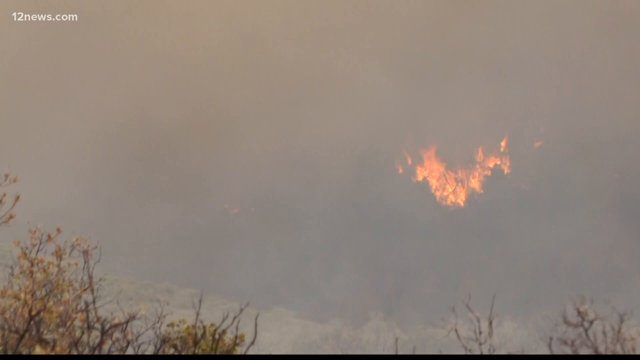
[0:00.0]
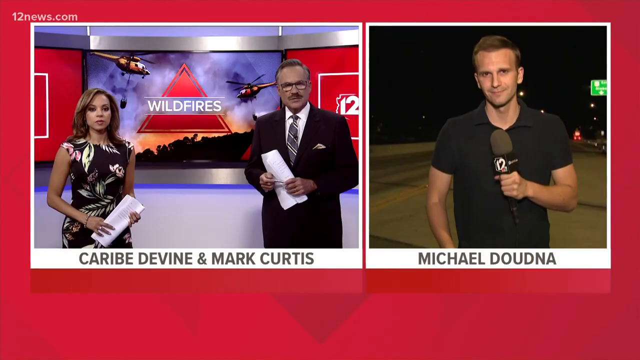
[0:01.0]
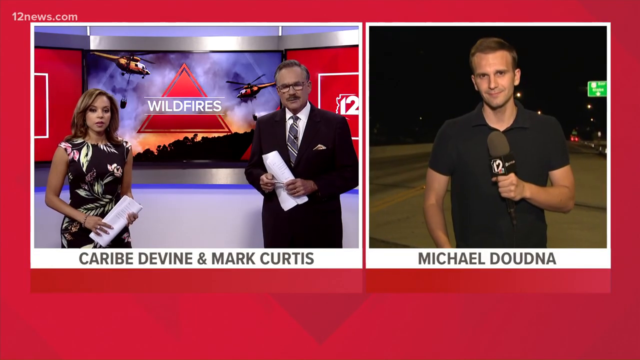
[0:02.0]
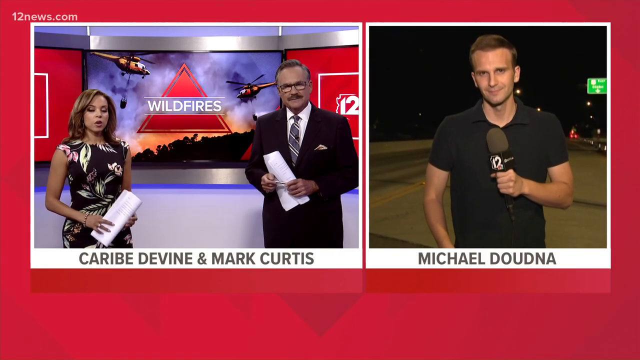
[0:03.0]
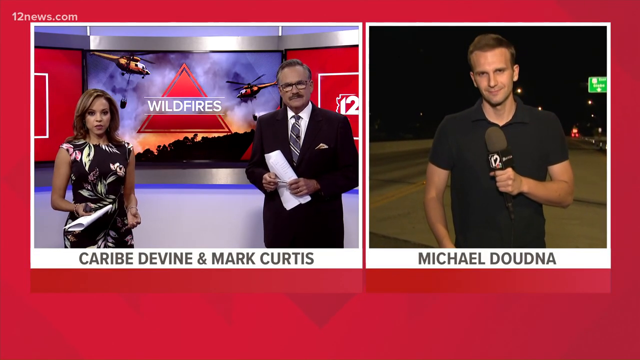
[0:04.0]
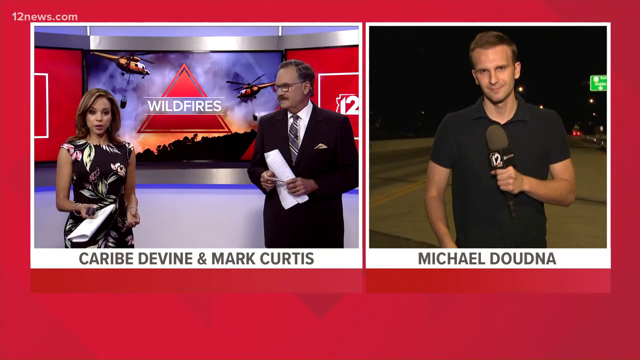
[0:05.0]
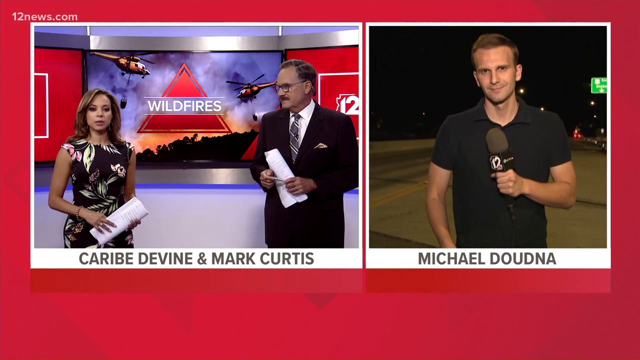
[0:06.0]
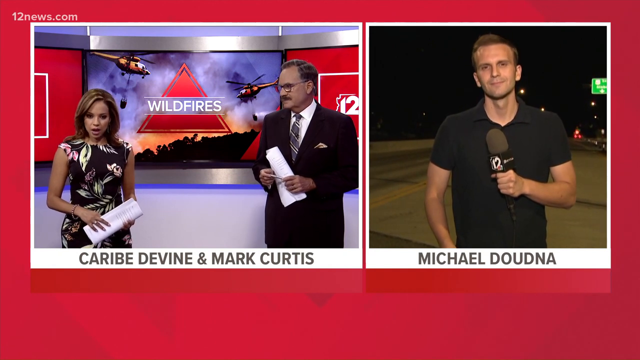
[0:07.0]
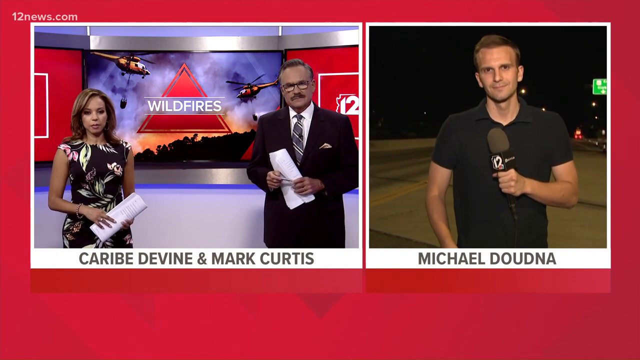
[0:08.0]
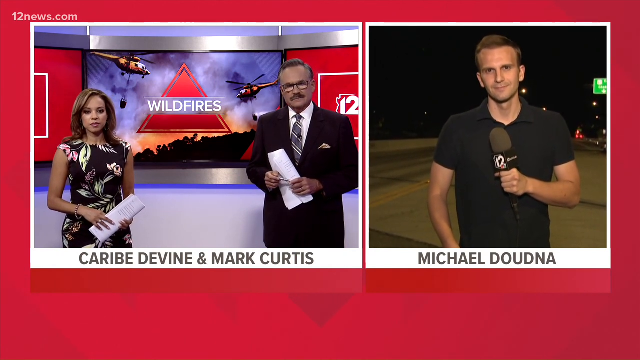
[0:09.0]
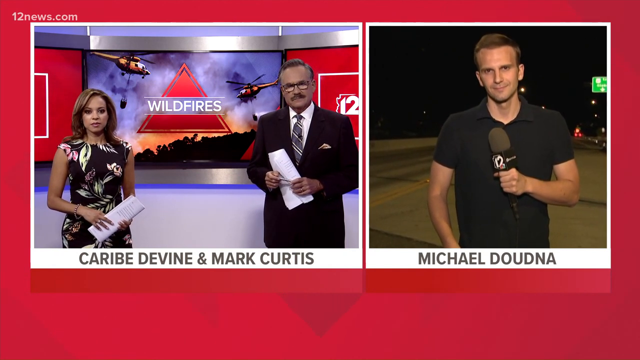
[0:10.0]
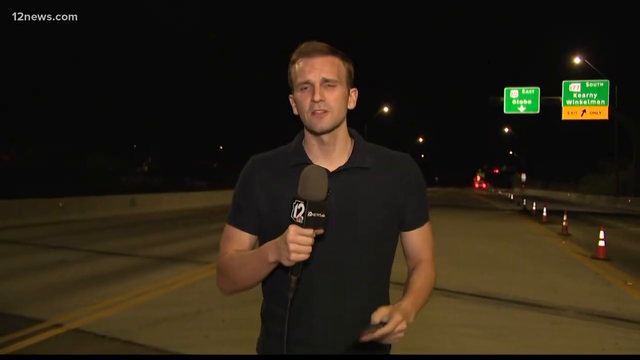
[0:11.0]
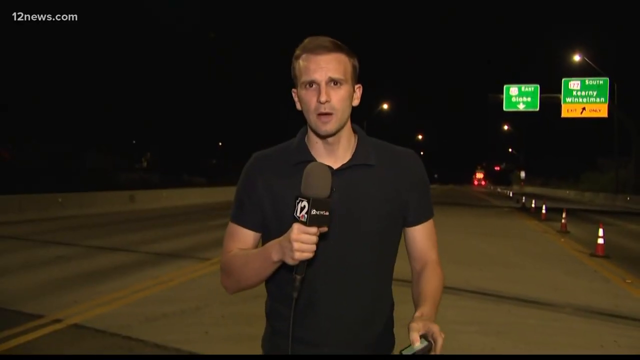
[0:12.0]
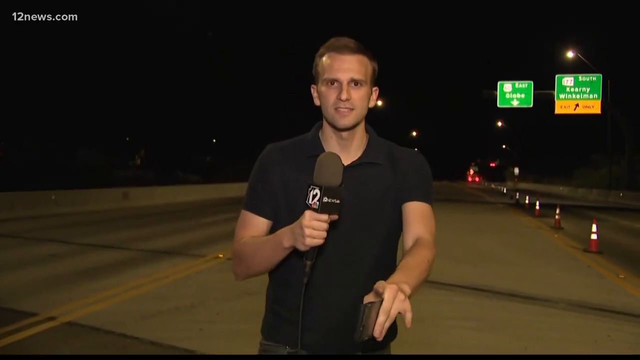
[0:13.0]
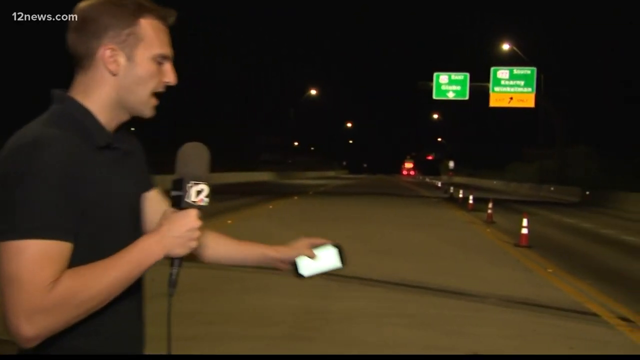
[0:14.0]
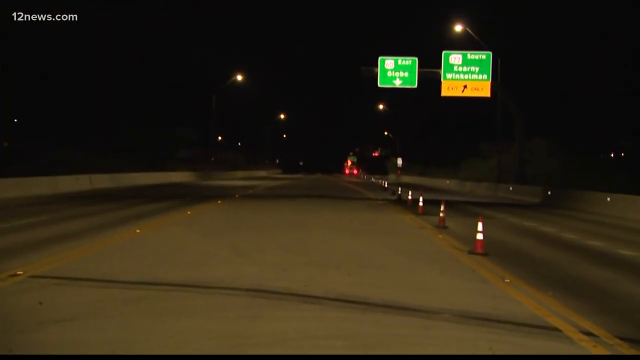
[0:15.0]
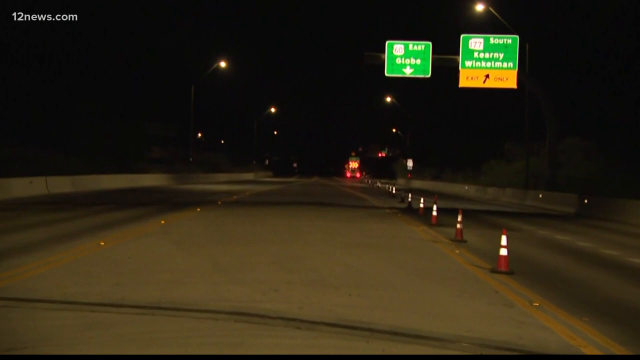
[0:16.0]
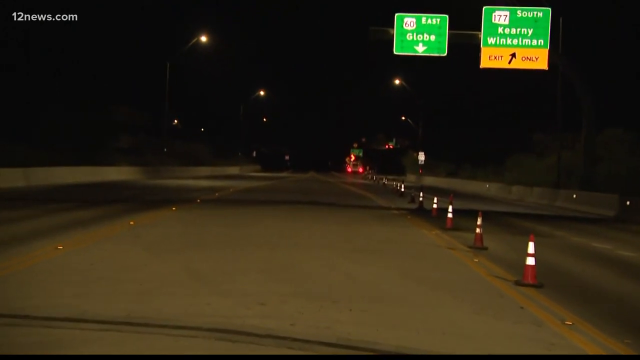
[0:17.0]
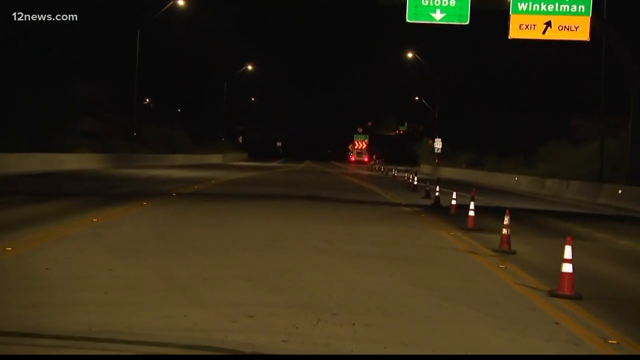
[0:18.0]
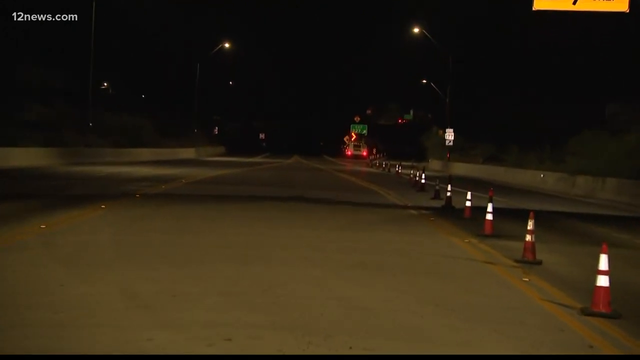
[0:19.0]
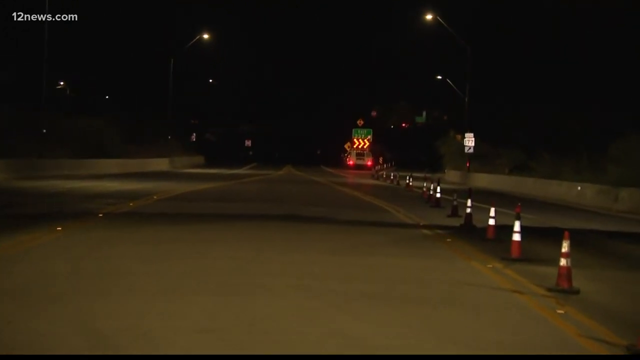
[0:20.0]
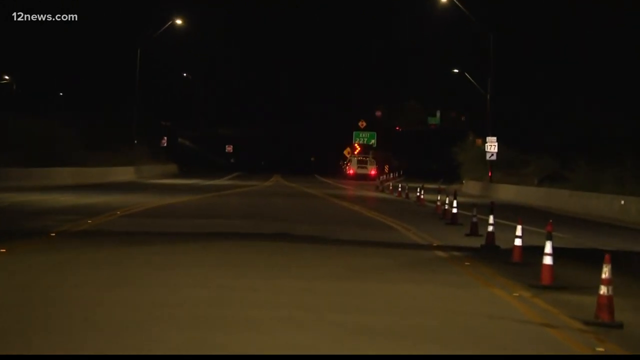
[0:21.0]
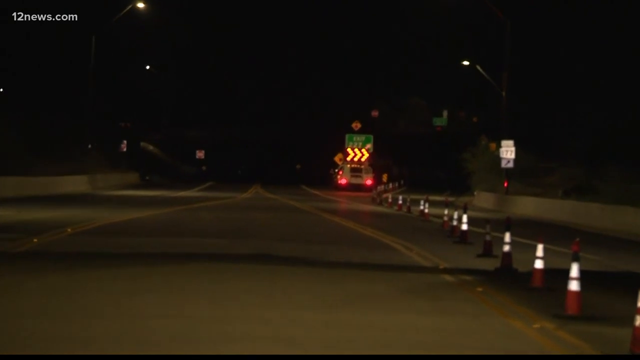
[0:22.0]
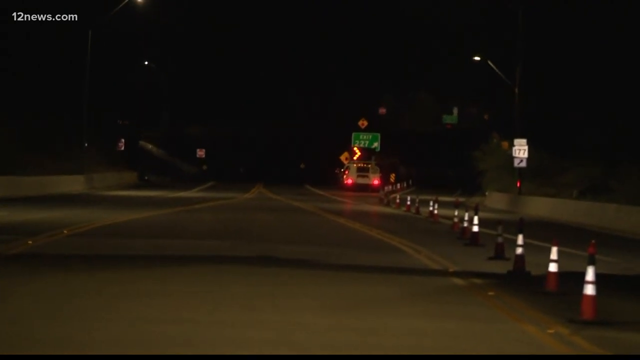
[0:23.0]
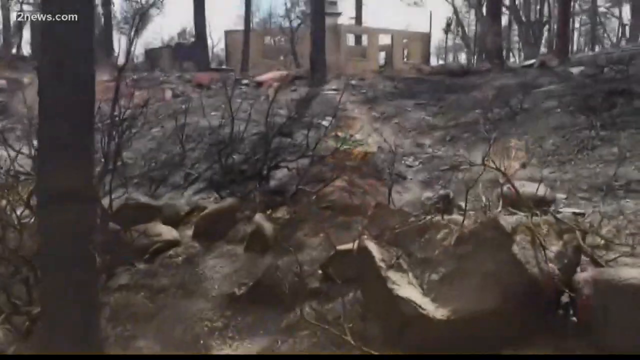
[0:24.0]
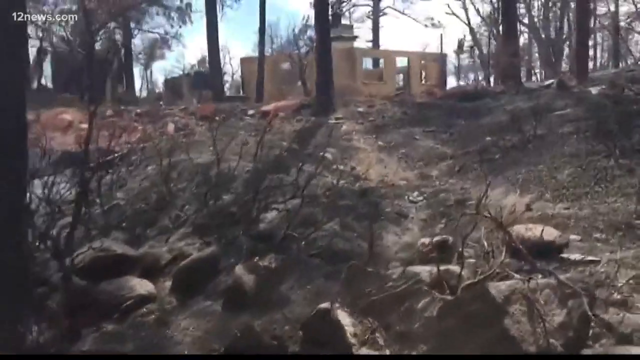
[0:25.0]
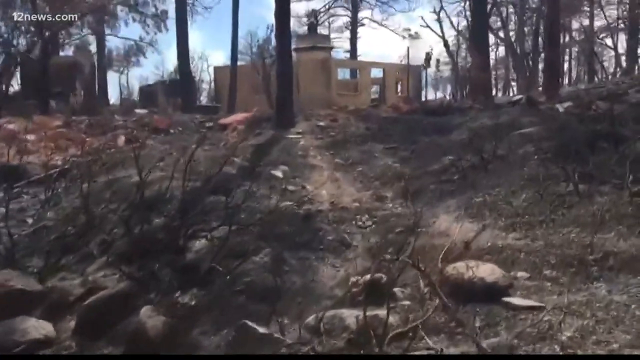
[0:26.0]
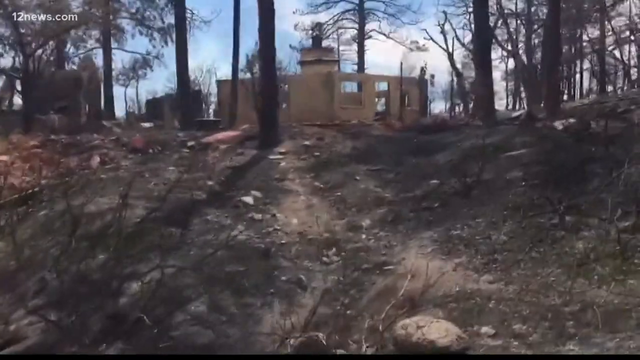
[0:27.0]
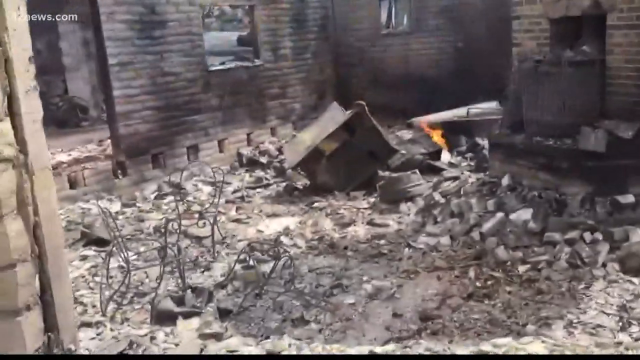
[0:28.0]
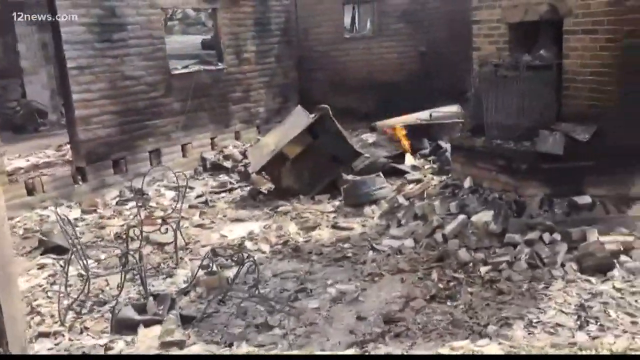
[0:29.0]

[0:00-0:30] What appears to be a 12 News live broadcast shows a fire occurring in a mountainside area. The video cuts to two news anchors, Caribe Devine and Mark Curtis, speaking with news correspondent Michael Doudna at the scene. It then cuts to Doudna showing live footage of vehicles being rerouted on a stretch of road, with markers and cones being placed on the street. The camera zooms in to show more detail before a transition to several scenes of burned-down homes and the vegetation around them. The last footage is an interior view of a fire-destroyed home. There are about four jump cuts in the span of three seconds.